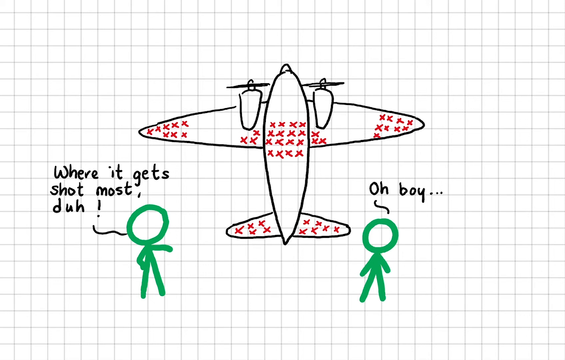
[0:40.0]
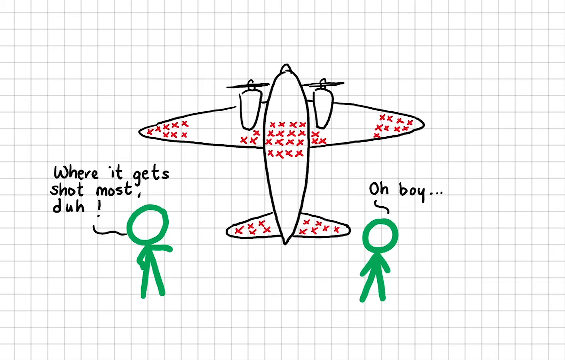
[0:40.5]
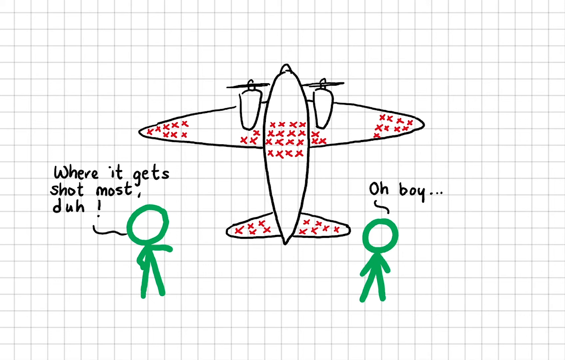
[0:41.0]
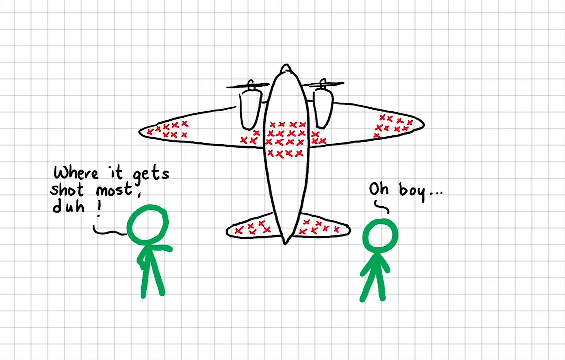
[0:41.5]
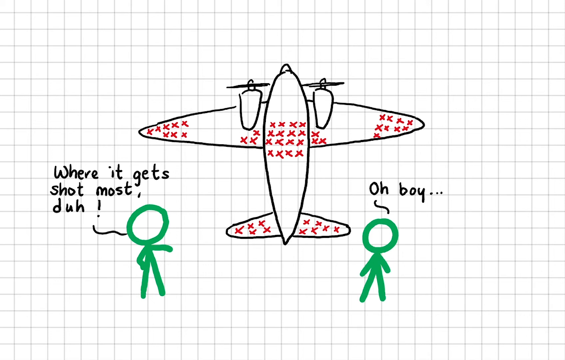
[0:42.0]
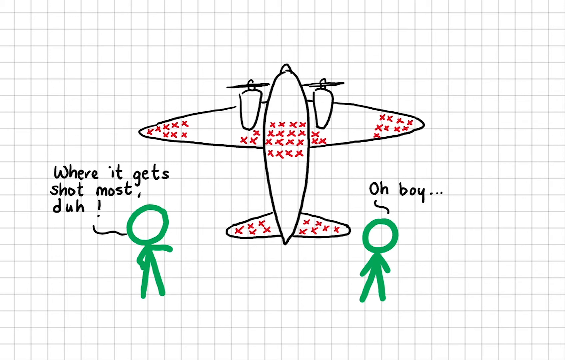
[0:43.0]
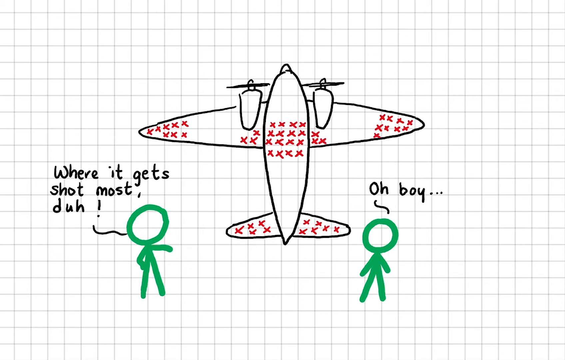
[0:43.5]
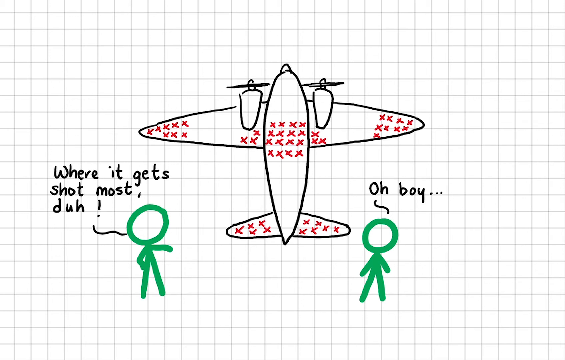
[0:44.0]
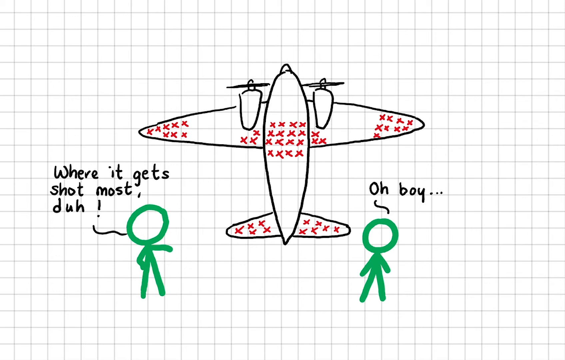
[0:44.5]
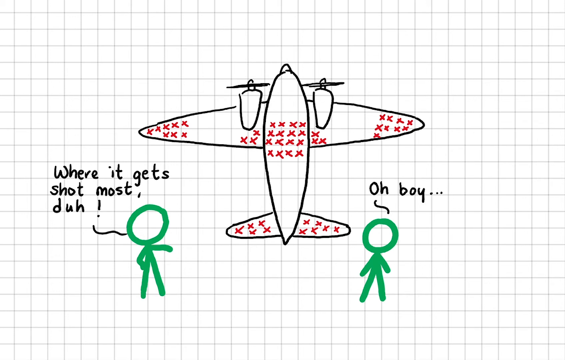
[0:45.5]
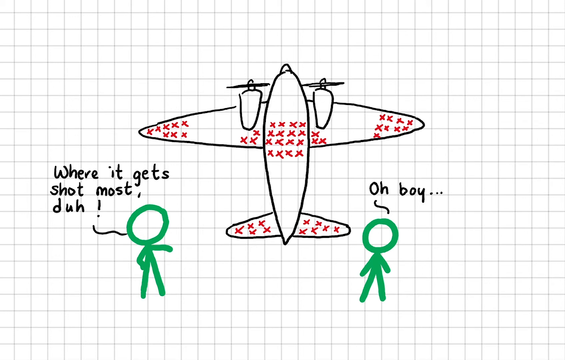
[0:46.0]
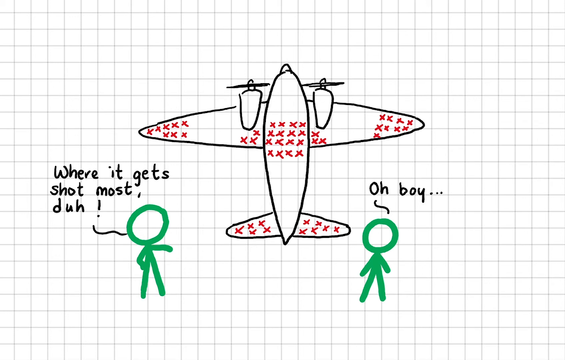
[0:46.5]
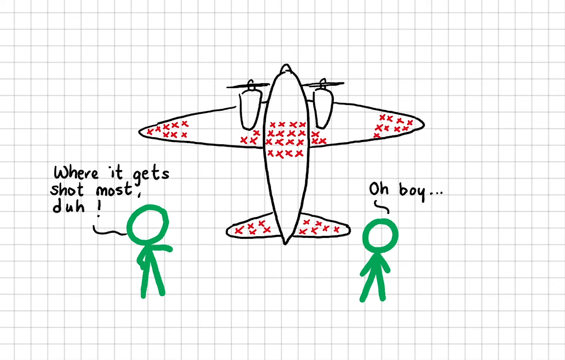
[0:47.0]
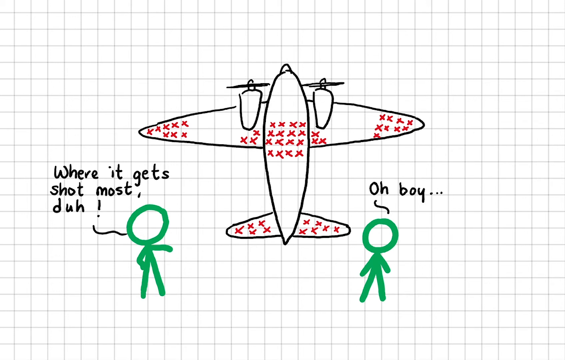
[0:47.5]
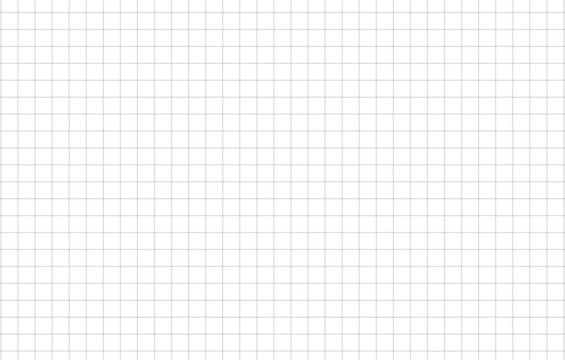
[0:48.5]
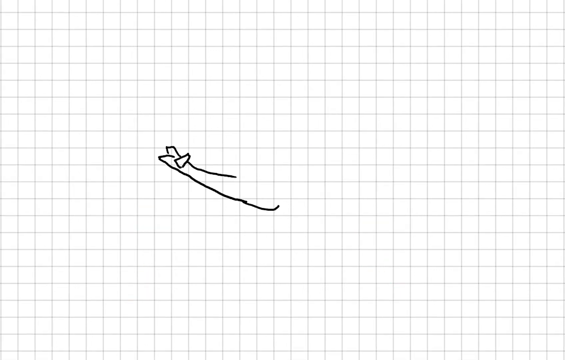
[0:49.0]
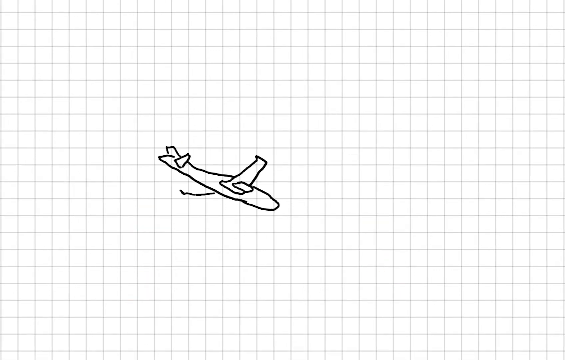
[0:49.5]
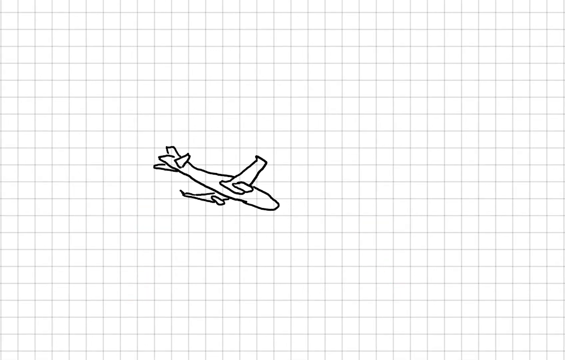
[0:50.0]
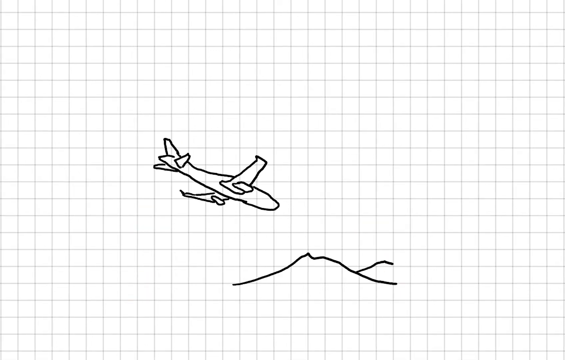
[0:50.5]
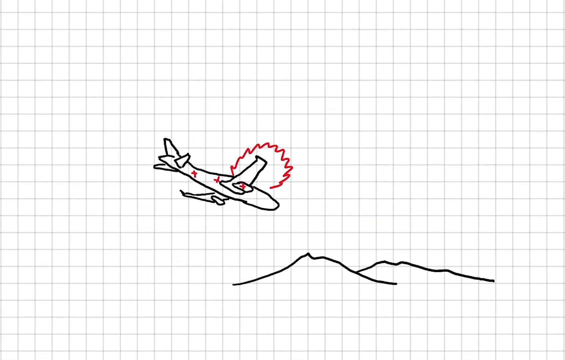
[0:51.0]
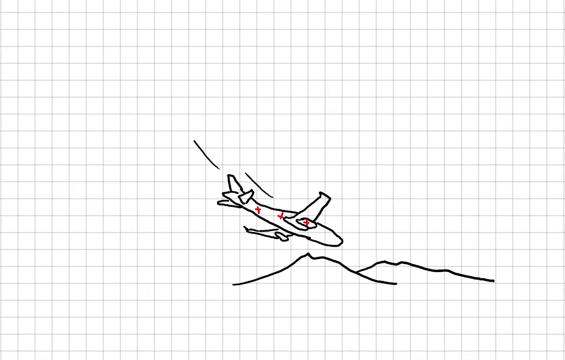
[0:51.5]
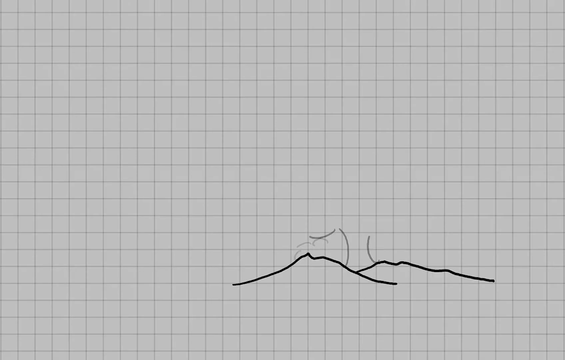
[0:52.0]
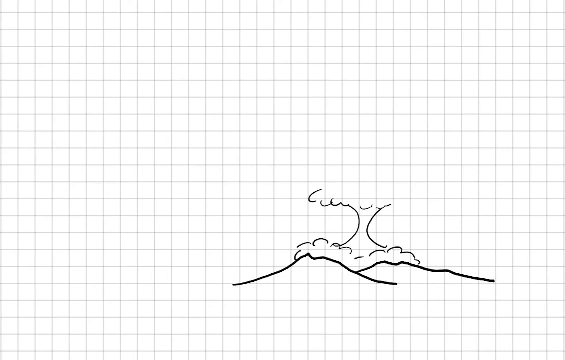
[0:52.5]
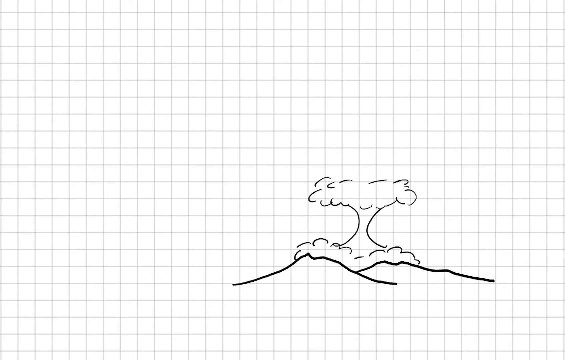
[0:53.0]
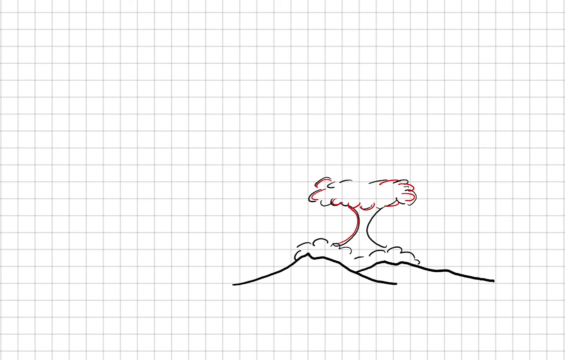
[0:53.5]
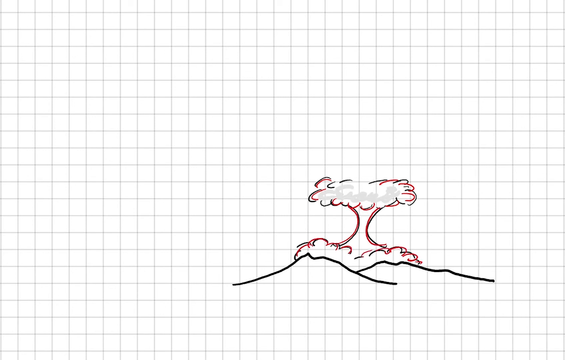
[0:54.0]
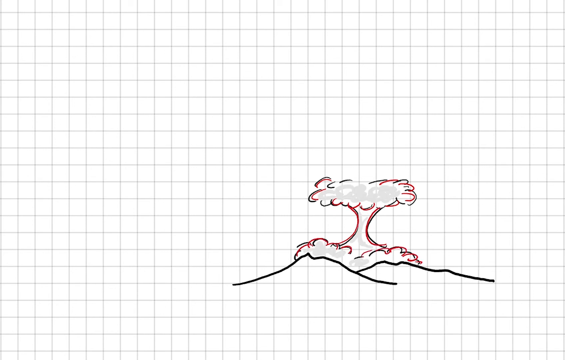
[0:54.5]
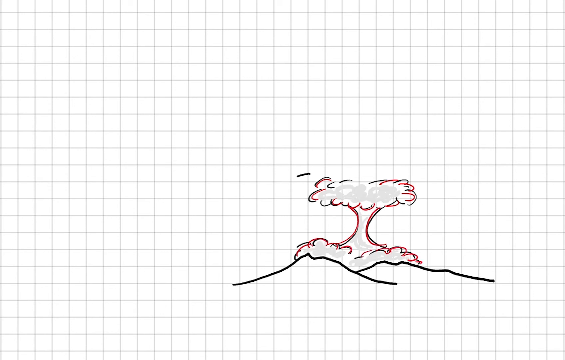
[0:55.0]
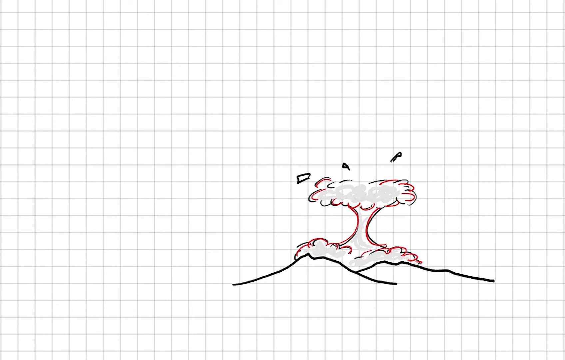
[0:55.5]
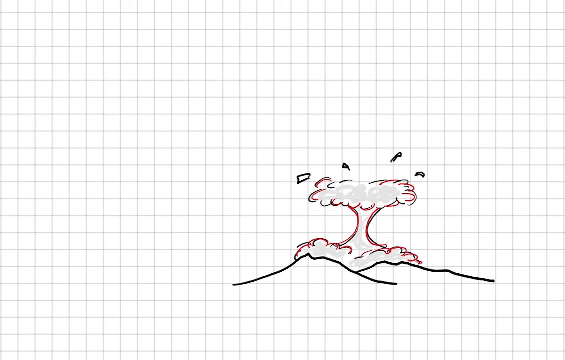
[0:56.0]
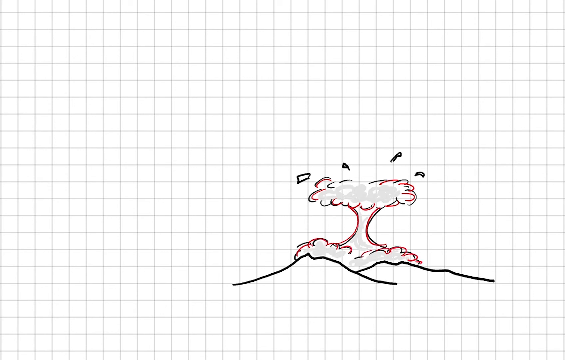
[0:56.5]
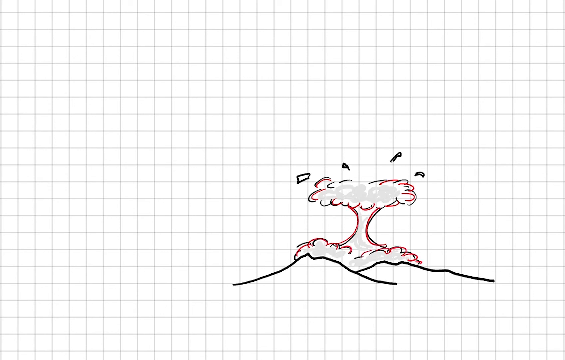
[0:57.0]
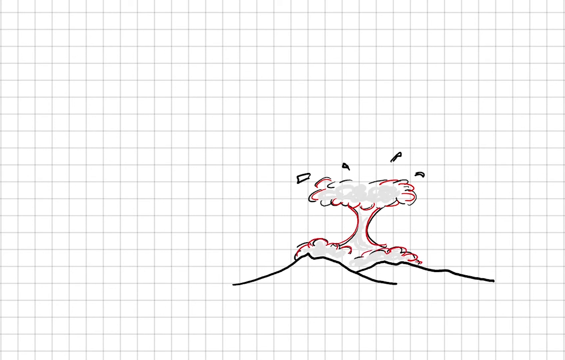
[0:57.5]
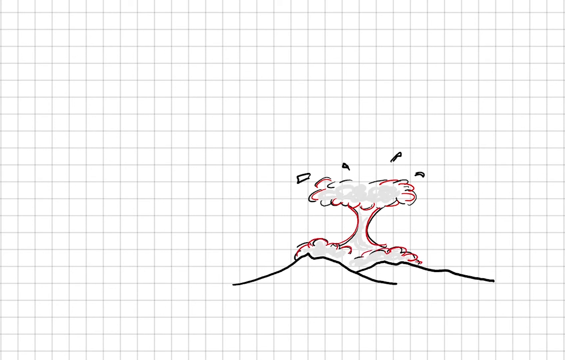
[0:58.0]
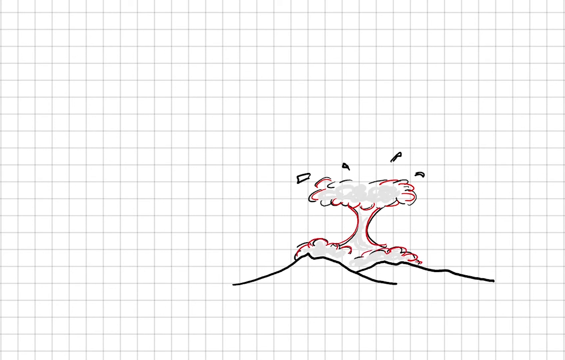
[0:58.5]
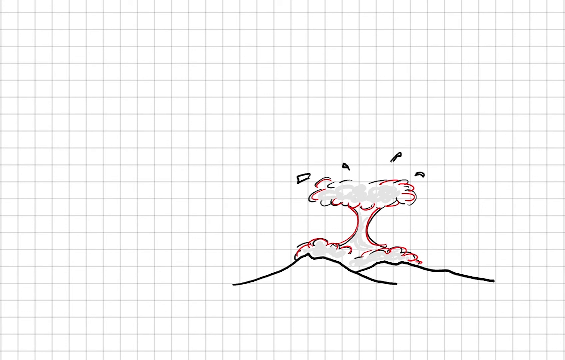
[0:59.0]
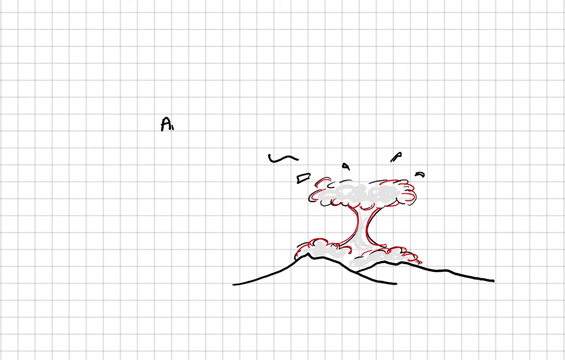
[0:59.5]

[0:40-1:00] The dialogue between the two green stick men continues; their bodies are made of lines and their heads are just circles. The character on the left tells the character on the right "where it hurts we get shot most". The edits then disappear from the screen, and a cartoon illustration appears of what looks like the plane crashing into a mountain, followed by smoke, which is highlighted with a red pen. The man then makes edits on the screen in black writing.